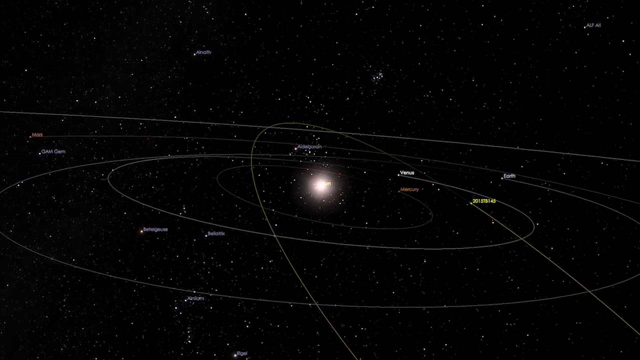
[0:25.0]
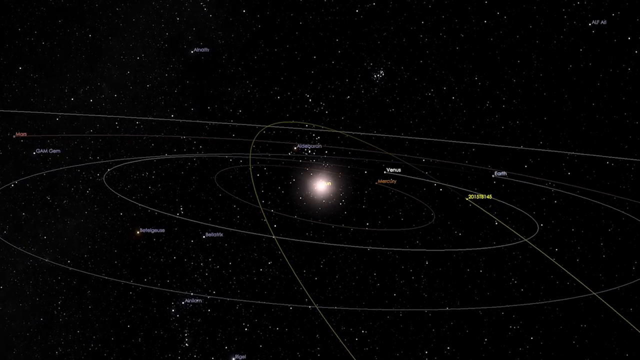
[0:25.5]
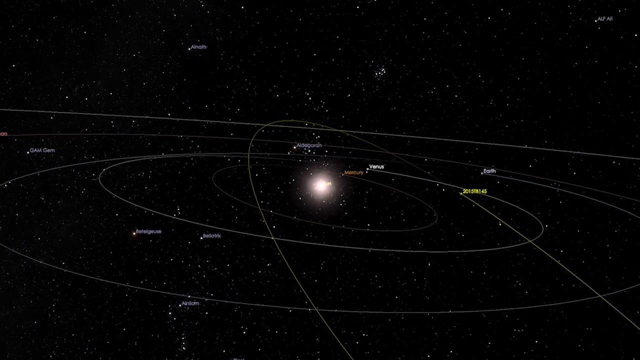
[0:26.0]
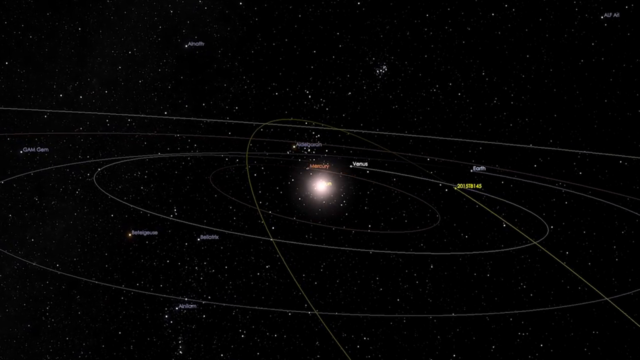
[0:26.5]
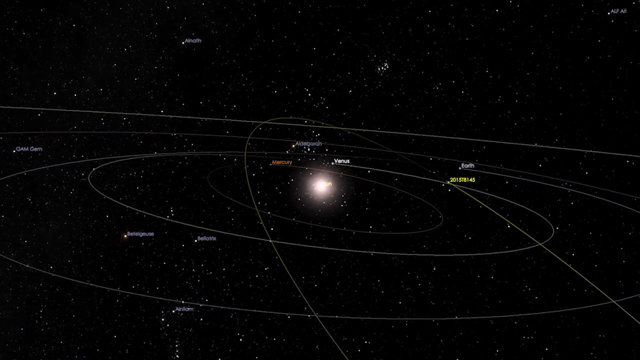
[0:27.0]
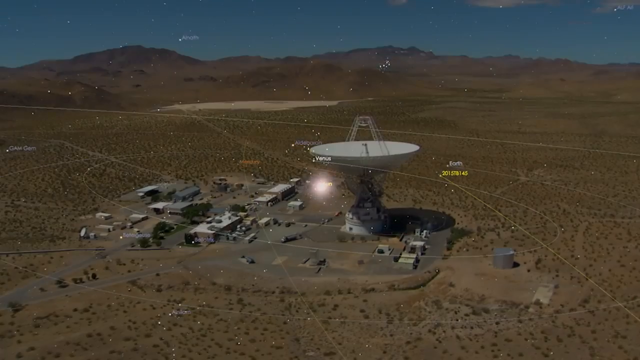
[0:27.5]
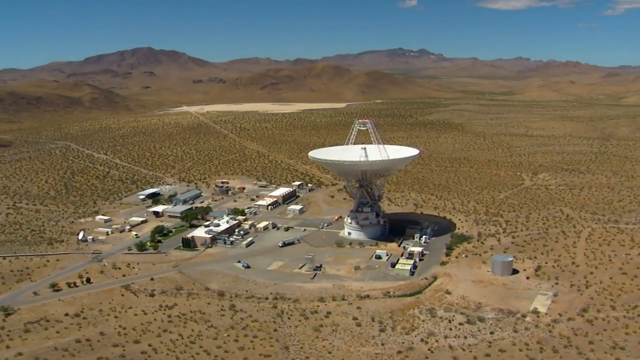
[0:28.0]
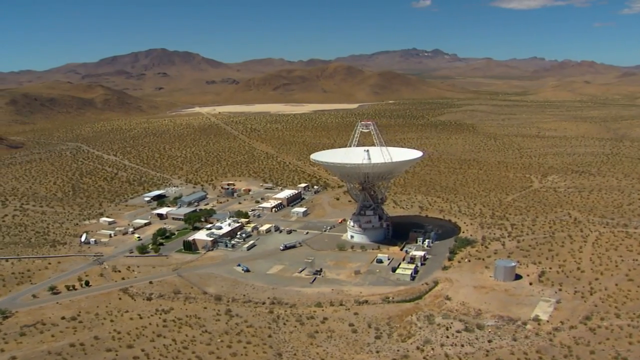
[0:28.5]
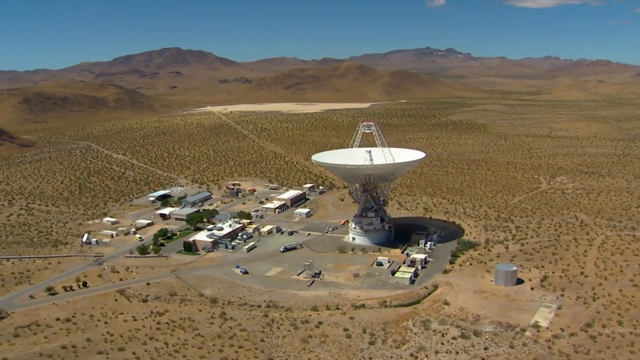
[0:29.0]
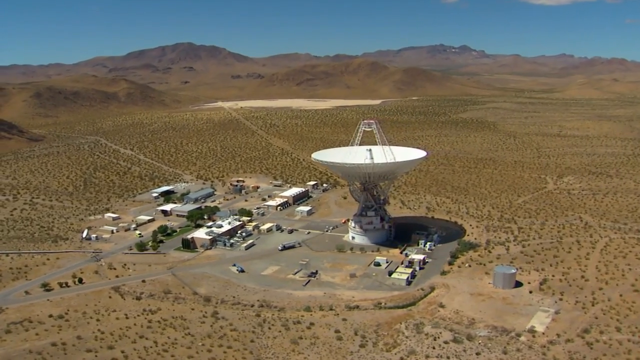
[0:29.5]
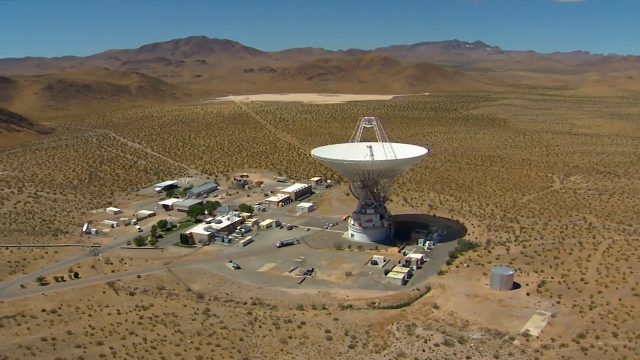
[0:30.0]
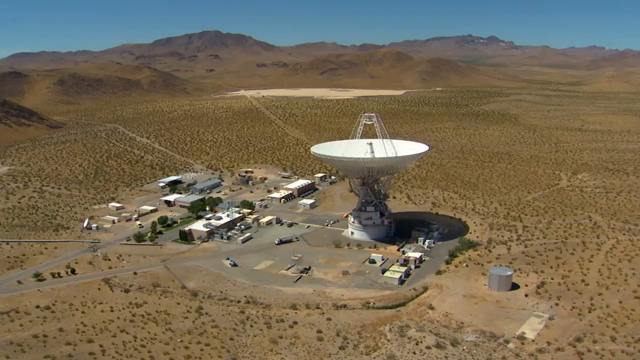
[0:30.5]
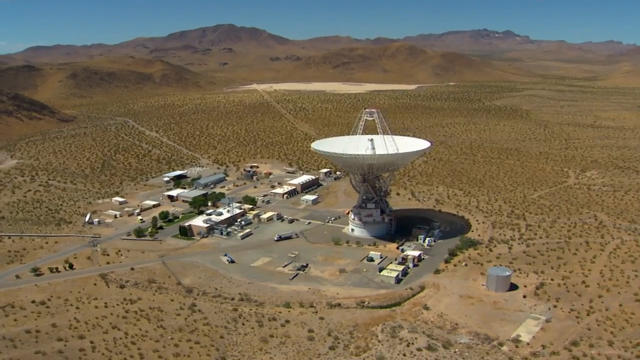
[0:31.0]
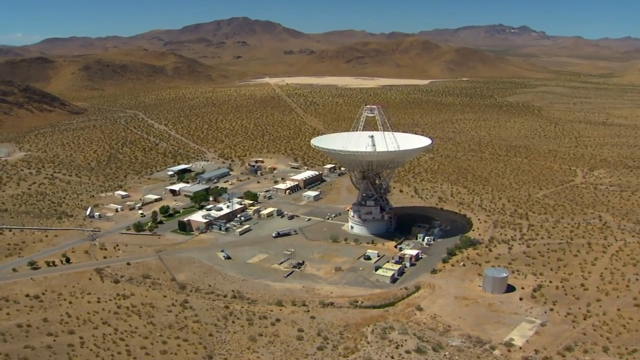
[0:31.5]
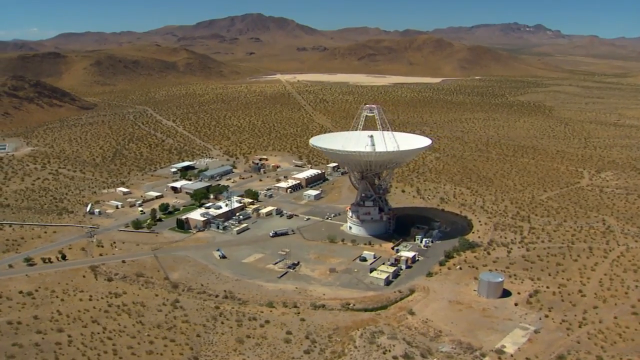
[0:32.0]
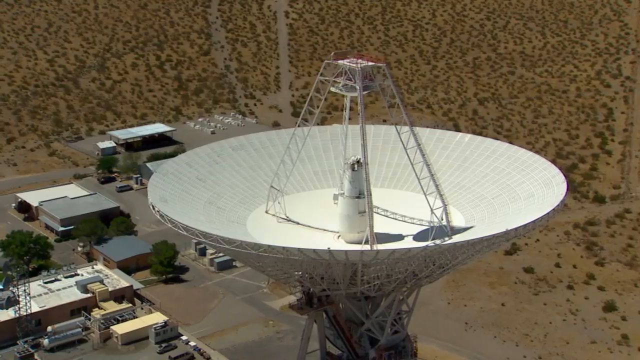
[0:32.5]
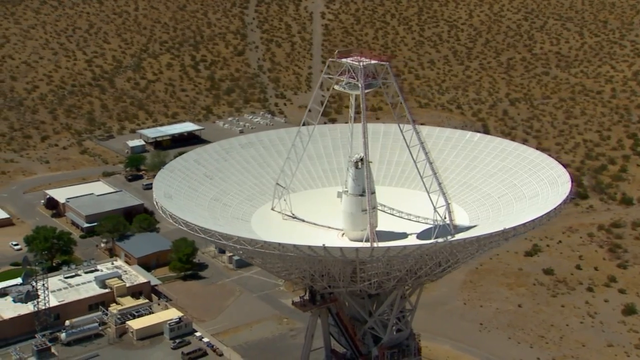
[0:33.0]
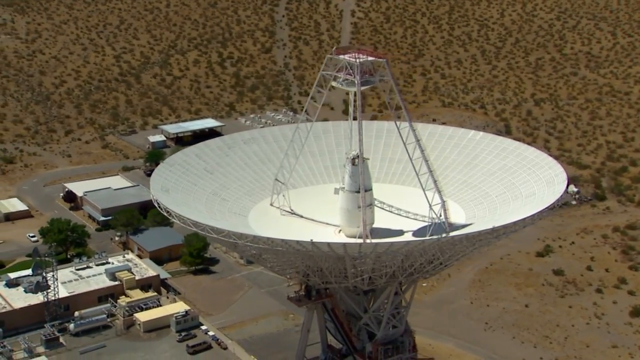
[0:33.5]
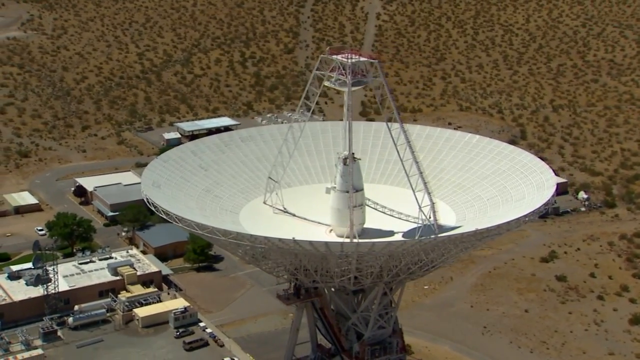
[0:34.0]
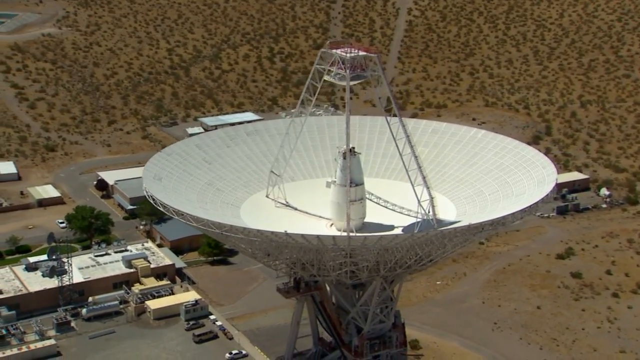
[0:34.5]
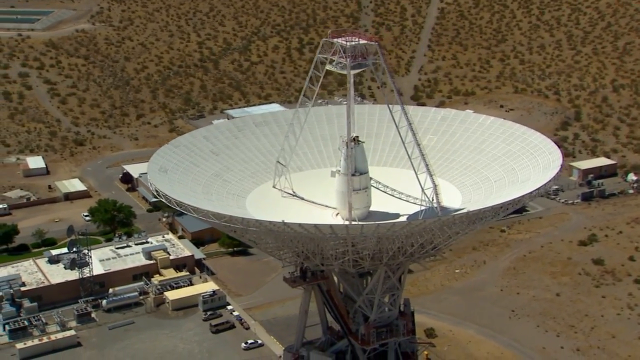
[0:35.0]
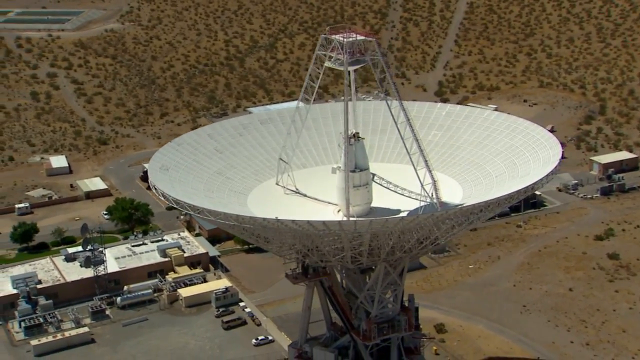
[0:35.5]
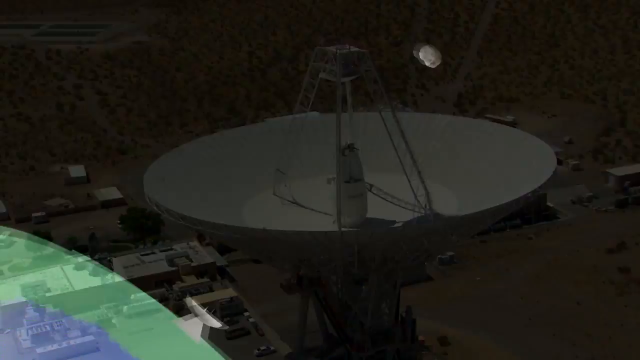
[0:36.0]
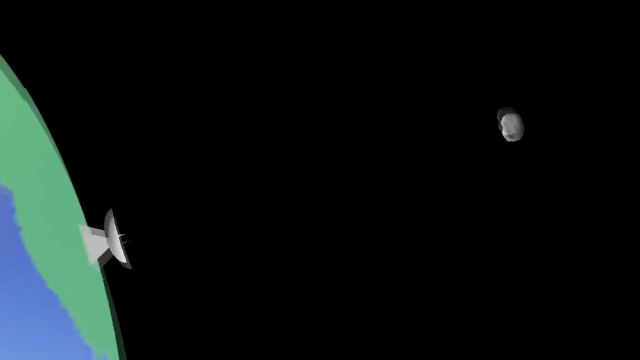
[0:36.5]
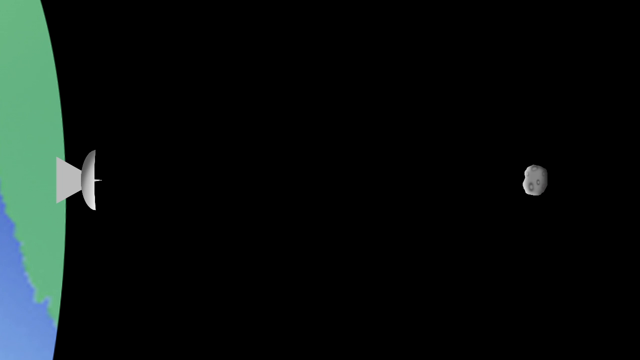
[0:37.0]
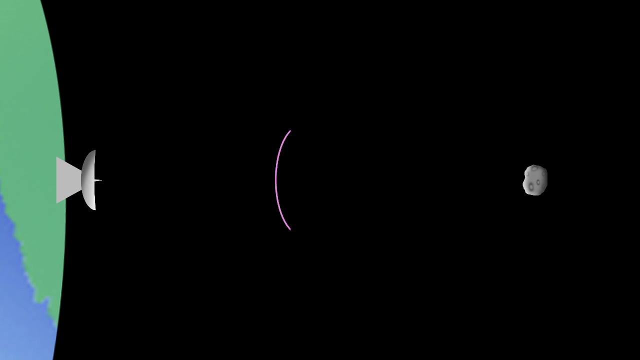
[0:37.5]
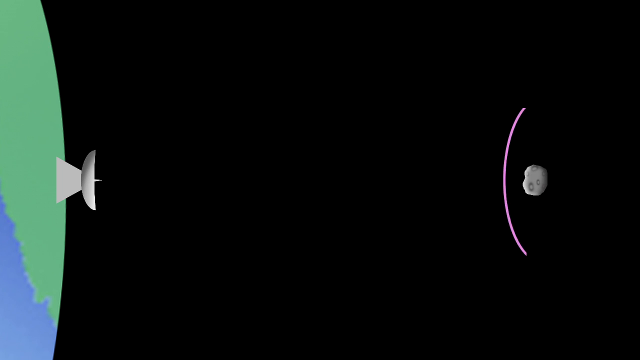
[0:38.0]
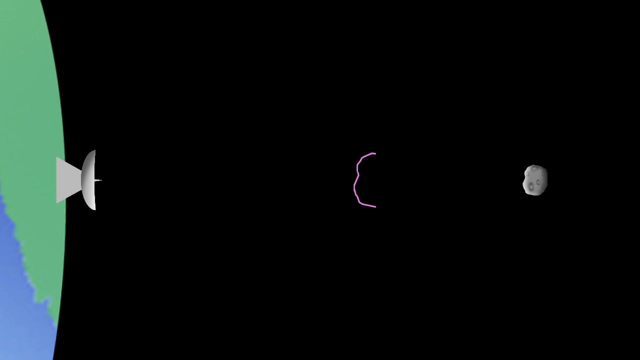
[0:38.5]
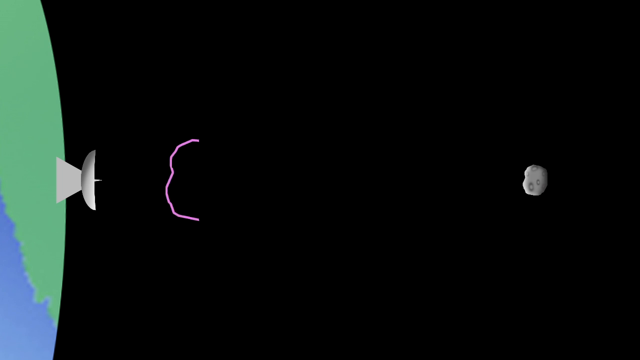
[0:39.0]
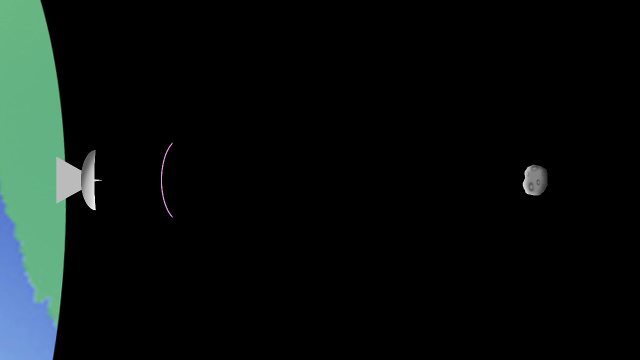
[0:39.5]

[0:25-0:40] The asteroid on its path appears briefly, then the video moves to what looks like a very large radio or satellite telescope, probably in a remote area such as a desert or possibly a mountaintop or mountain range. A very large white satellite dish is shown with signals being sent out into space and received from space. A large, out-of-proportion drawing of the satellite dish on Earth shows signals being transmitted to and from an object in space, presumably the asteroid. The video cuts back and forth between other aspects of the path and an actual photograph or video feed of the satellite dish. Buildings surround the dish, very close to it.